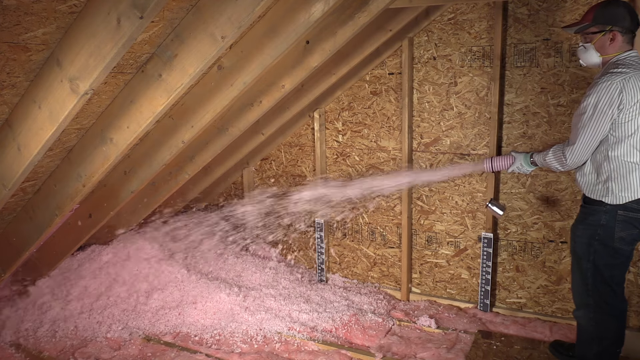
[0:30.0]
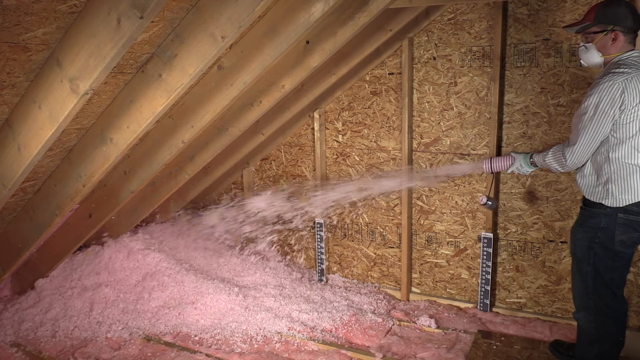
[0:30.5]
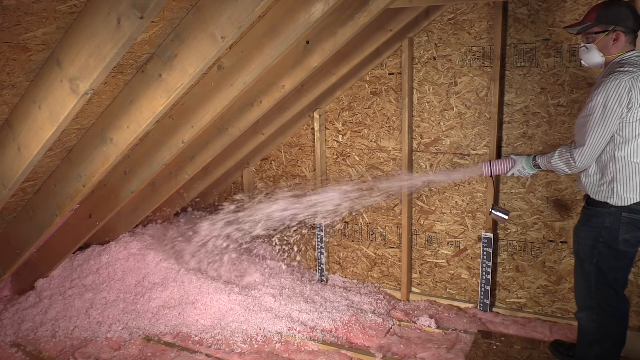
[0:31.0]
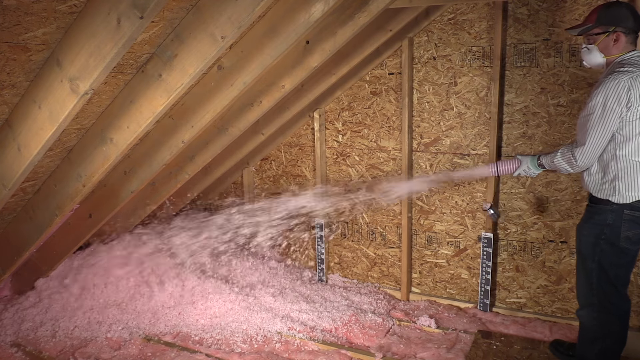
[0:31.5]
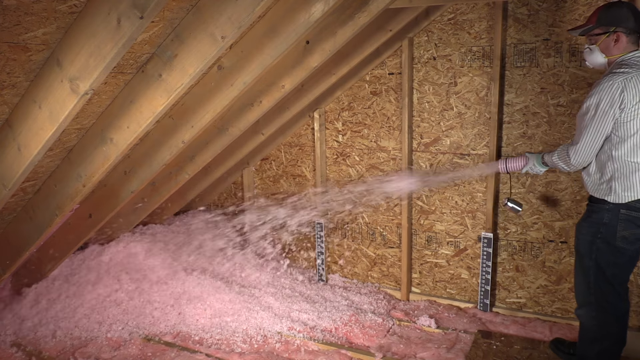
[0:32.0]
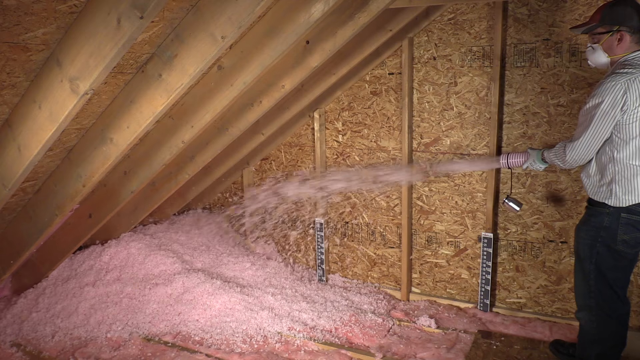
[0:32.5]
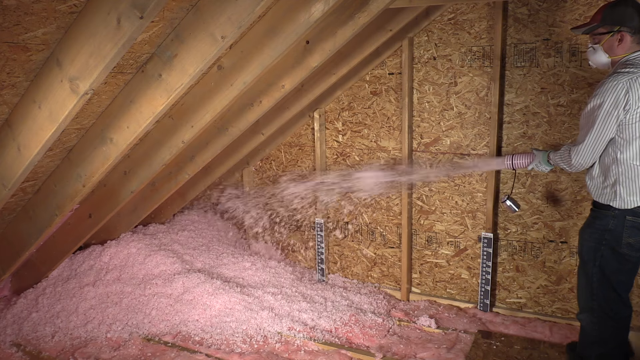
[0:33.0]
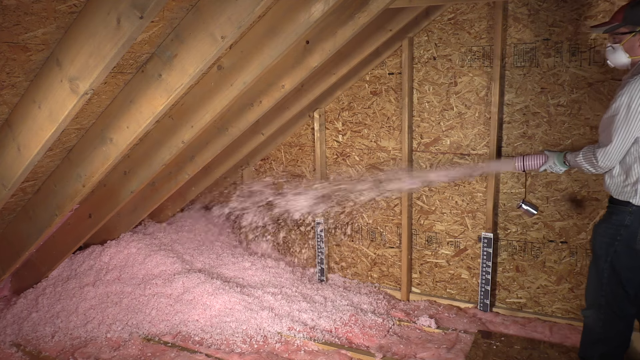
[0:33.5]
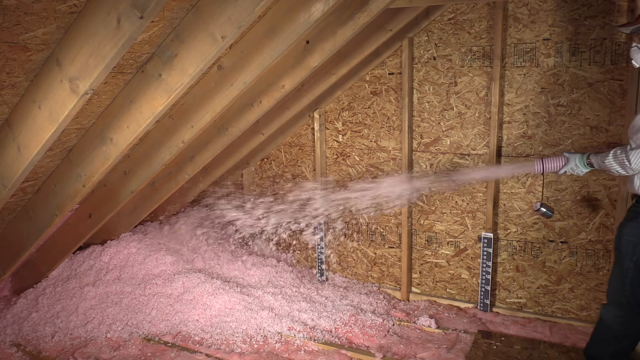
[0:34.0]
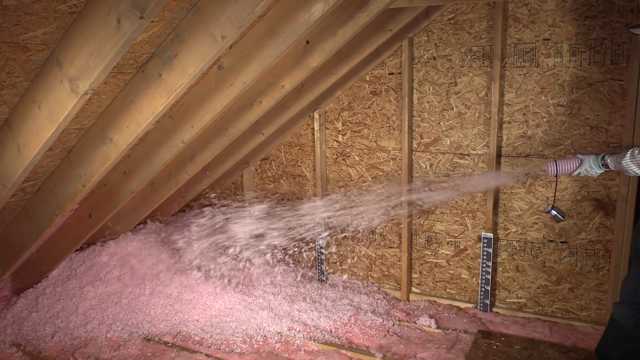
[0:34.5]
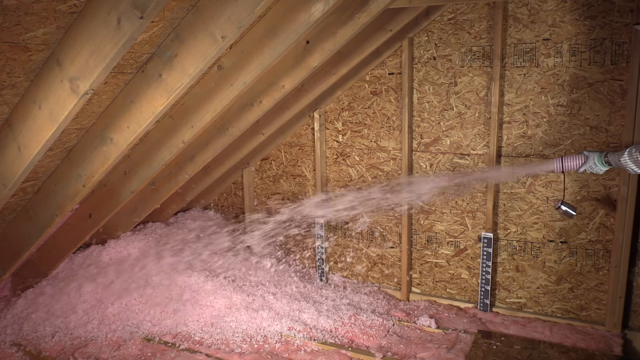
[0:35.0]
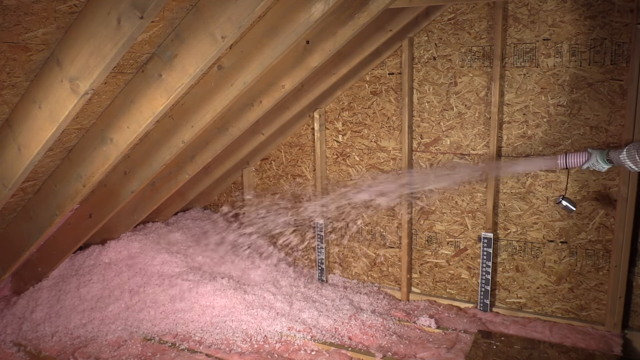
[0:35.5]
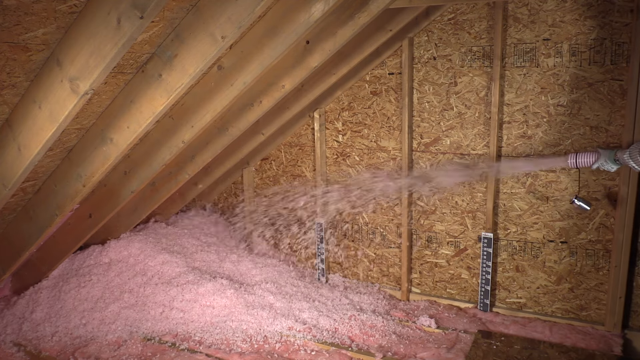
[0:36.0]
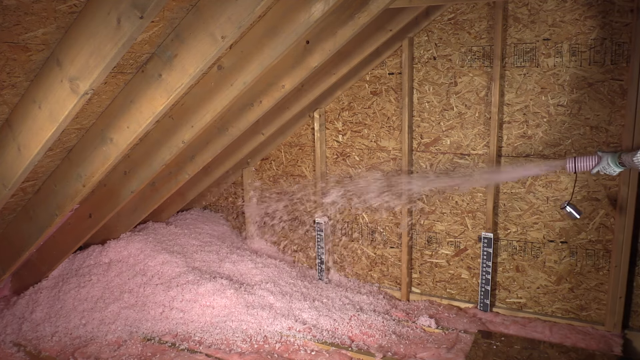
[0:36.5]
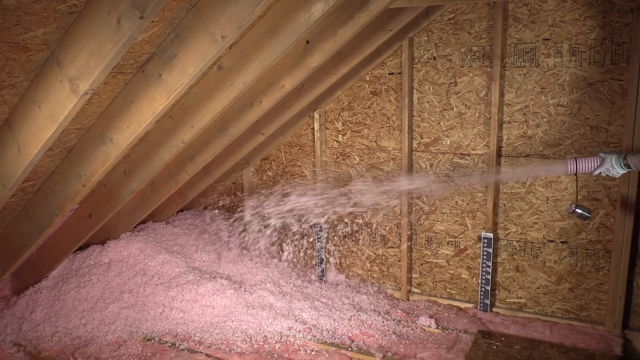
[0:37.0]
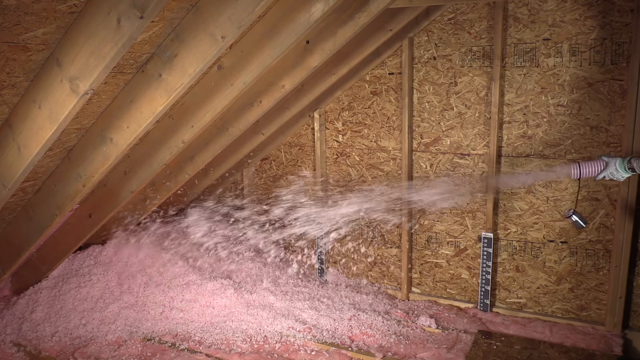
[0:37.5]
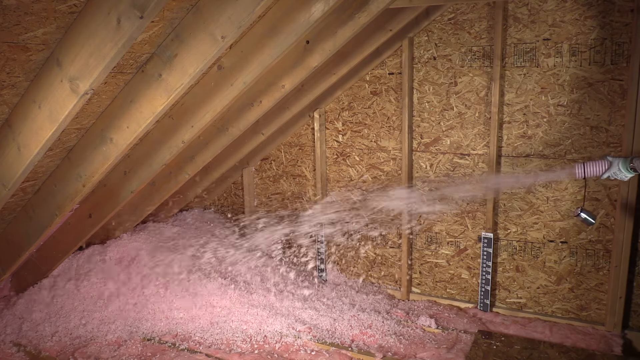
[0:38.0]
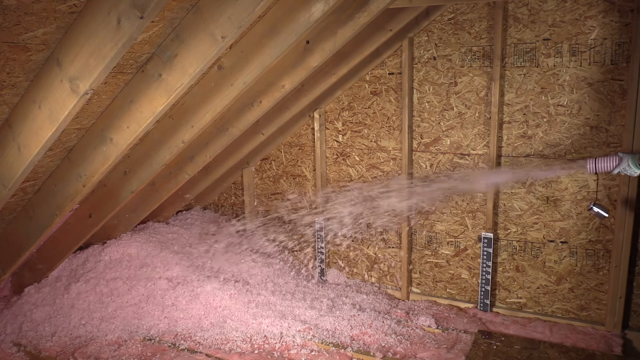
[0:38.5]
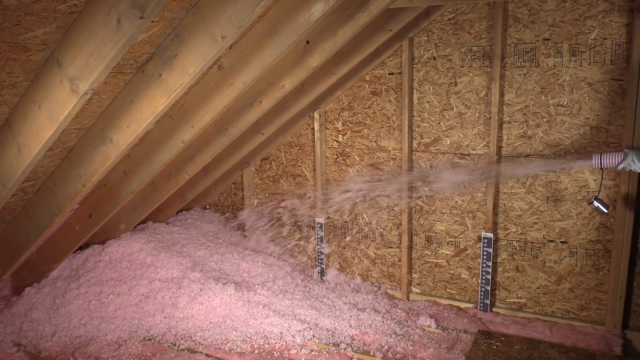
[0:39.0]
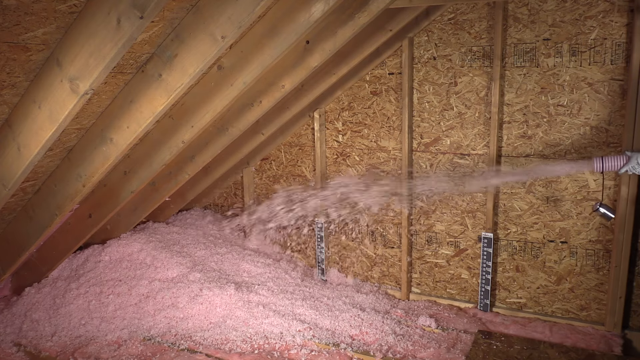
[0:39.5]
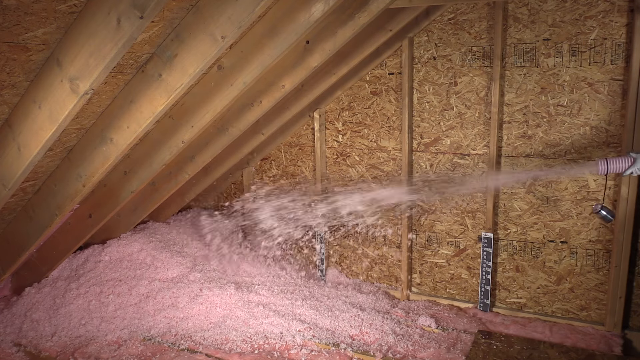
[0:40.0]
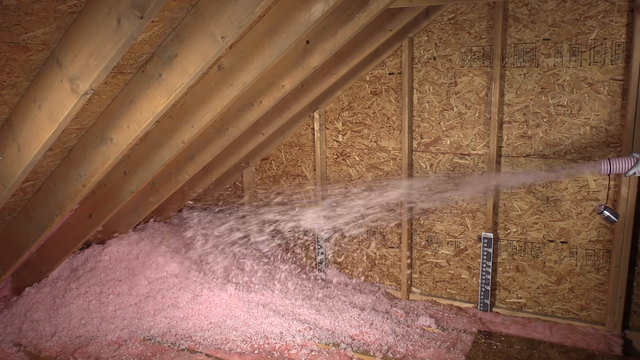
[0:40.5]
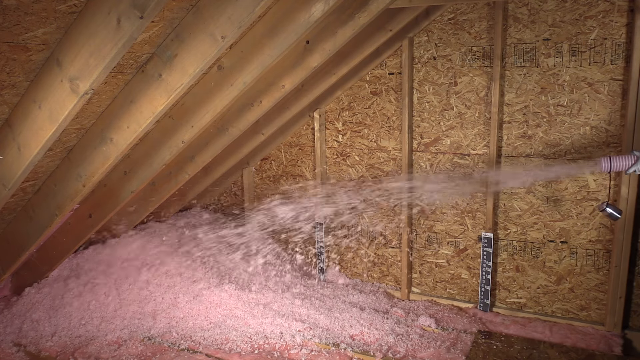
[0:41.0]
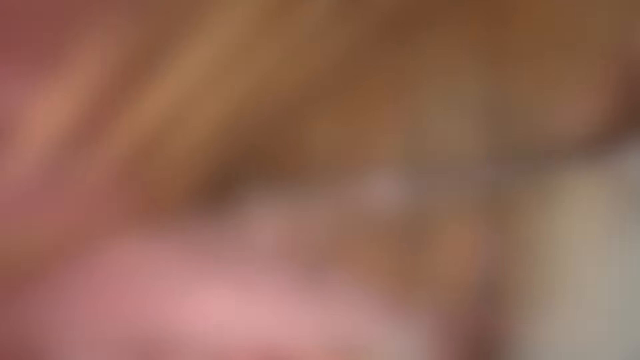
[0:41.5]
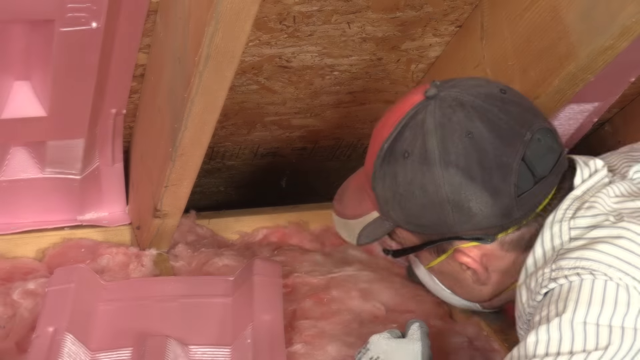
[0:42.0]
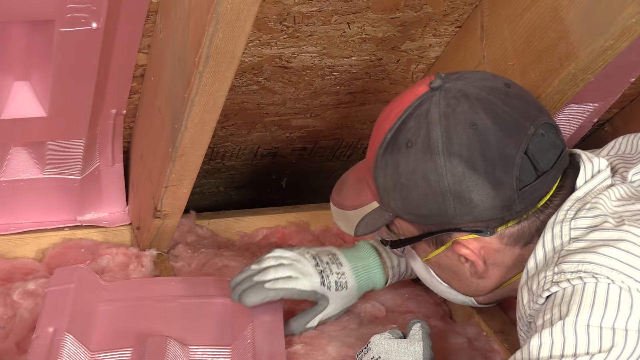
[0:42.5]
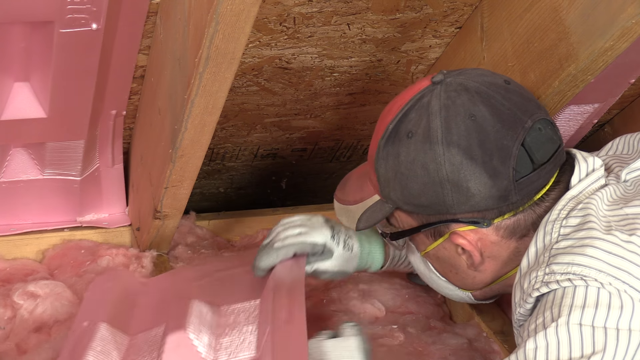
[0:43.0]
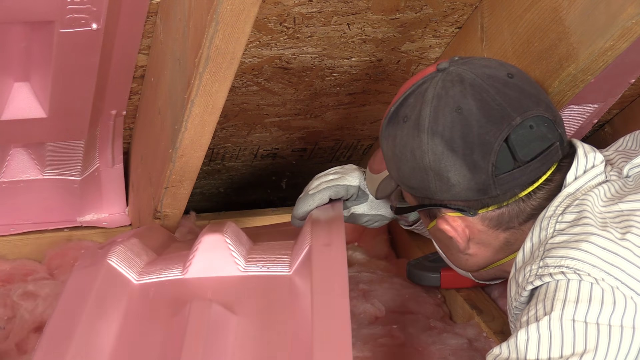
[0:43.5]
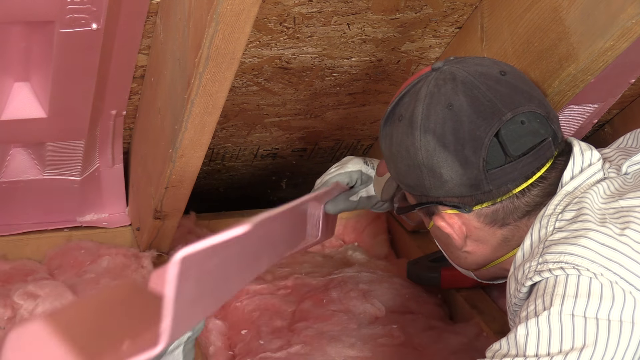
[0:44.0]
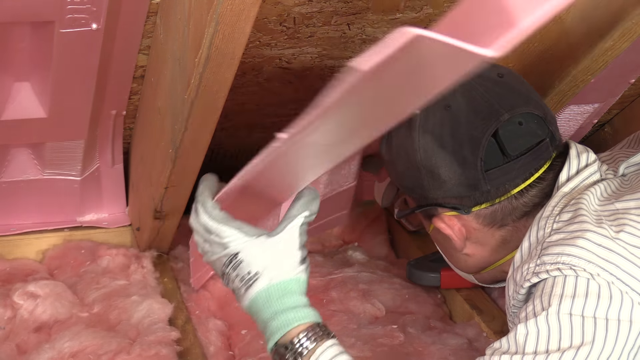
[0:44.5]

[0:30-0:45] Inside an attic, a man has his back right at the right-hand edge of the frame, squirting pink particulate matter from a hose onto the attic floor just at the edge of where the slanted part of the roof seems to meet the floor. He wears a black baseball cap, a white protective mask over his face and nose, black jeans, a gray and white vertically striped shirt, gloves, and glasses. He slowly backs out of the picture while squirting more of the insulation onto the floor. The scene then changes: he is bending over without the hose, picking up a piece of pink material, and it looks like he is trying to insert it into the wall, though what he is doing is unclear.